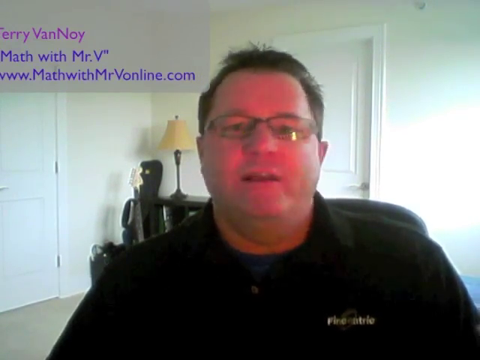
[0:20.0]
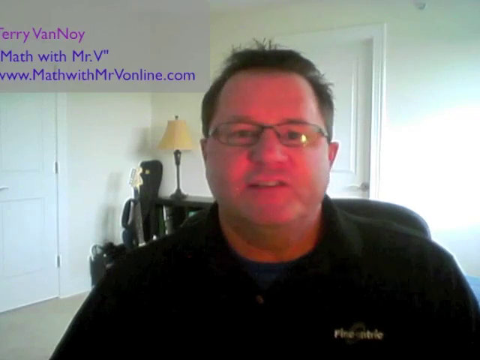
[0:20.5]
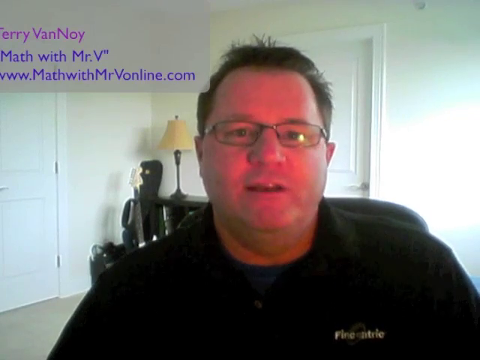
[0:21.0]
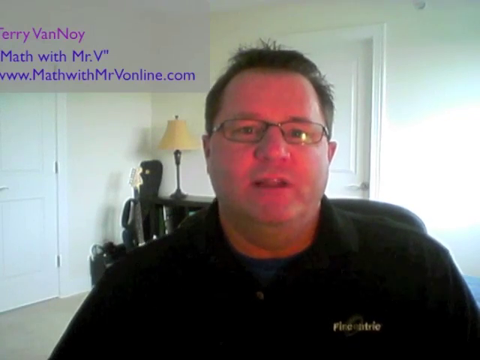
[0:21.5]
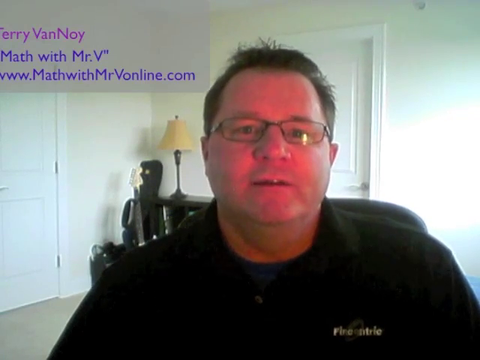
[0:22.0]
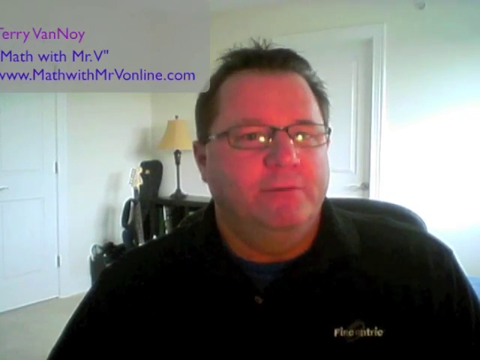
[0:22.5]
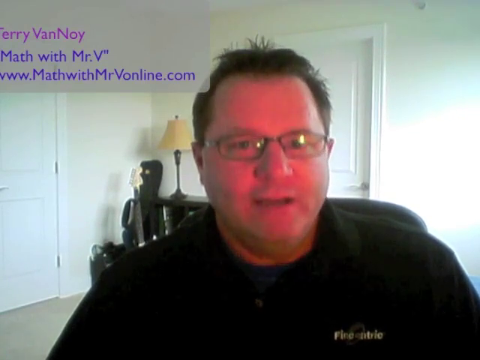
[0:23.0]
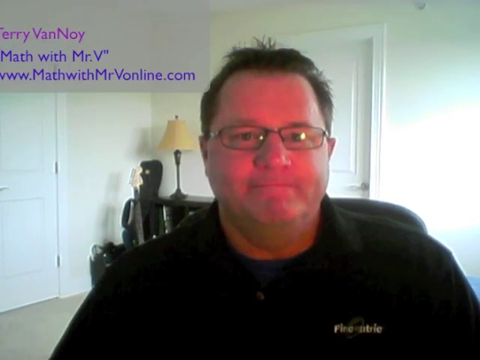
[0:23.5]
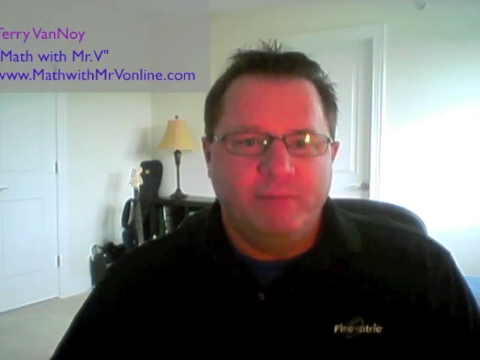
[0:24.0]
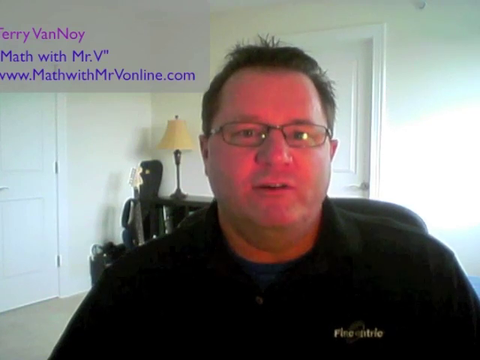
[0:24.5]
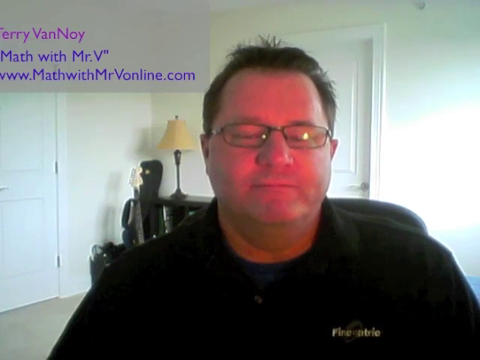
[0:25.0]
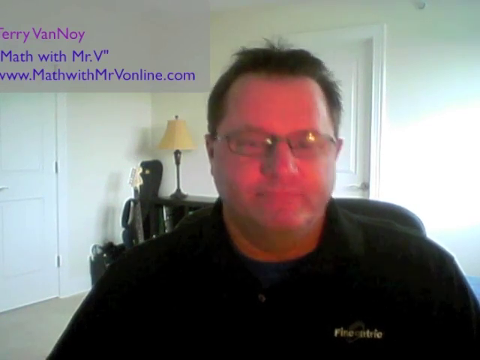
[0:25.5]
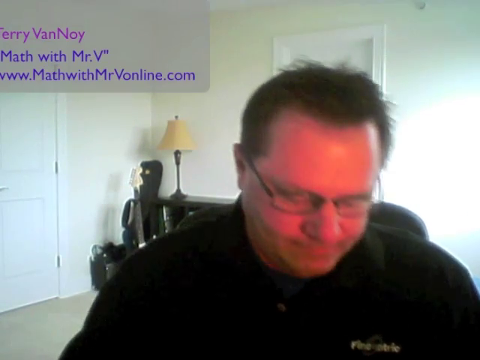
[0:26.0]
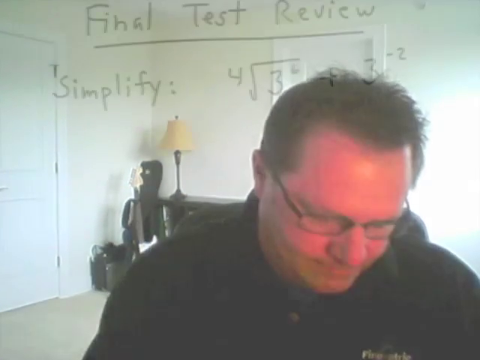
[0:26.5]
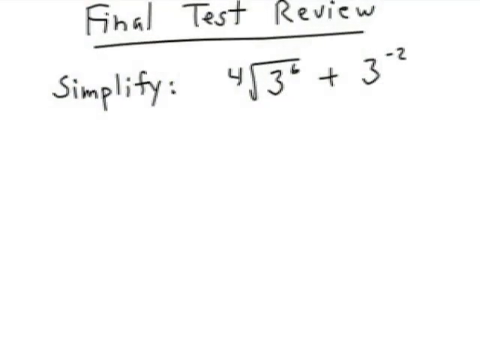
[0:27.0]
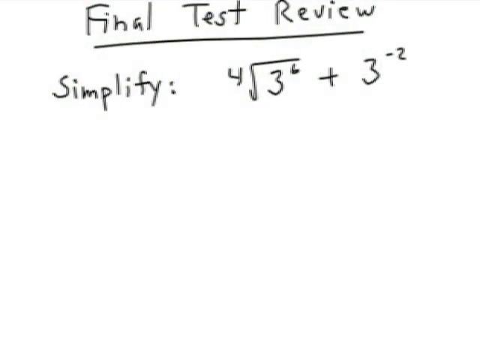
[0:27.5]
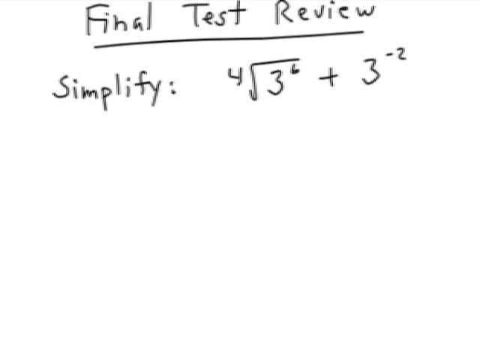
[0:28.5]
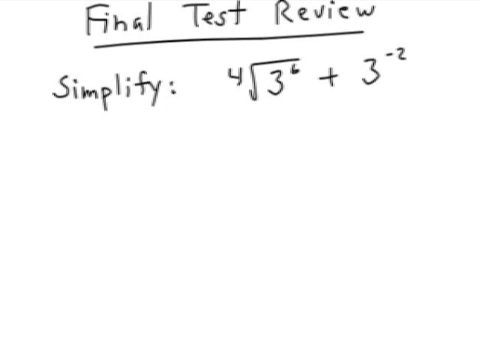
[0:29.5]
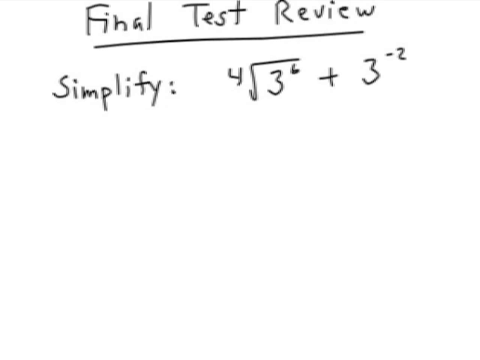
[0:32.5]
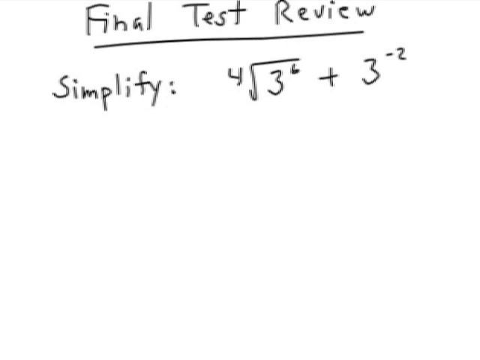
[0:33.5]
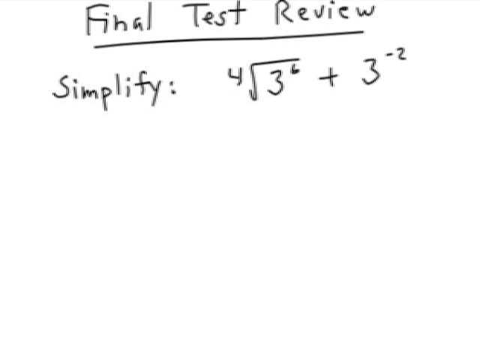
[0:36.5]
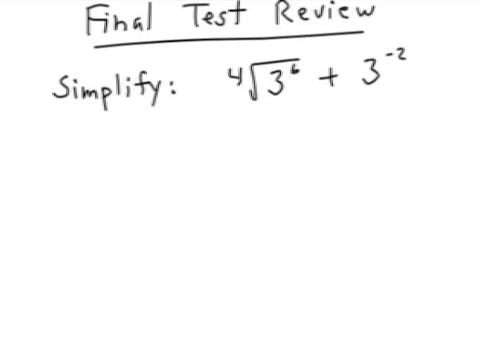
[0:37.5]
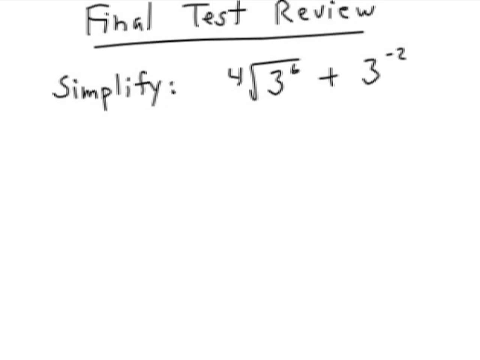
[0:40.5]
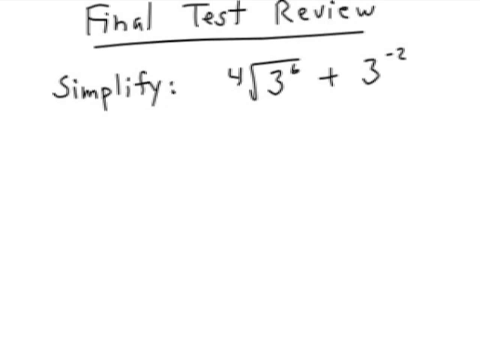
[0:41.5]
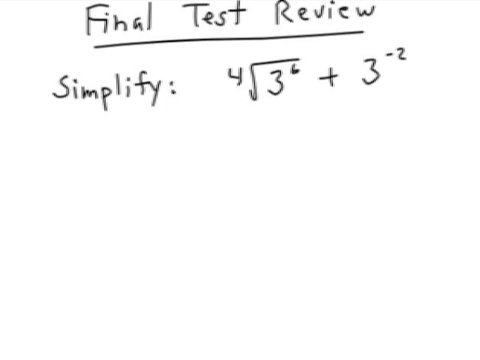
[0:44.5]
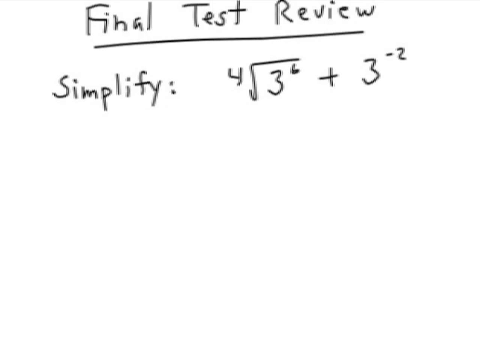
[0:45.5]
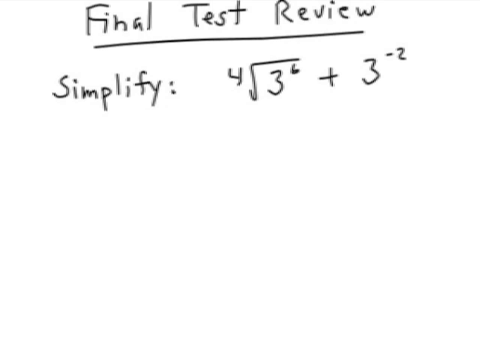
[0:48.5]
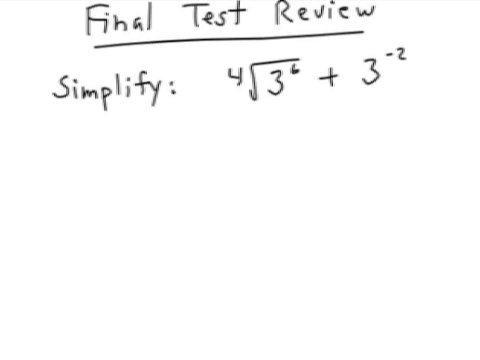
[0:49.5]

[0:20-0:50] A man sits in a basically white room. Behind him are two doors, one on one wall and one on the adjoining wall. In the corner between the doors there is a table with a lamp on it and a guitar standing up against the guitar case. The man, front and center, is slightly overweight, in his mid-30s to early 40s, and wears thin-framed glasses; his face has a pinkish glow. His hair is short and parted on the right, with little strands sticking up here and there, and his head is mostly round. He wears a black button-up shirt with a little writing on the left breast area. In the top left corner, "Terry Von Noy" appears in pinkish-purple, and below in purple are "Math with Mr. V" and "www.mathwithmrvonline.com". The man shakes his head in disagreement and agreement, then moves on to the final test review, simplifying 3 to the 6th power divided by 4 plus 3 to the negative 2nd.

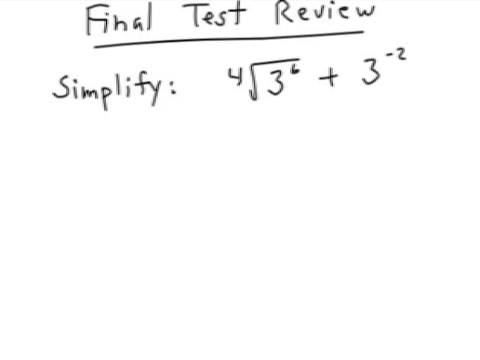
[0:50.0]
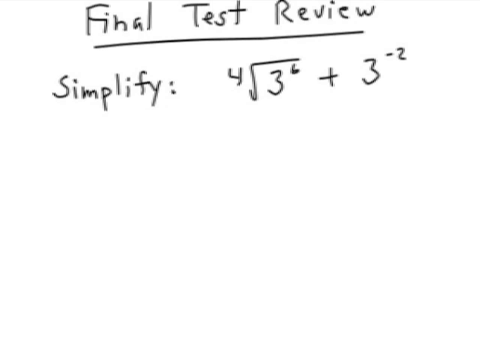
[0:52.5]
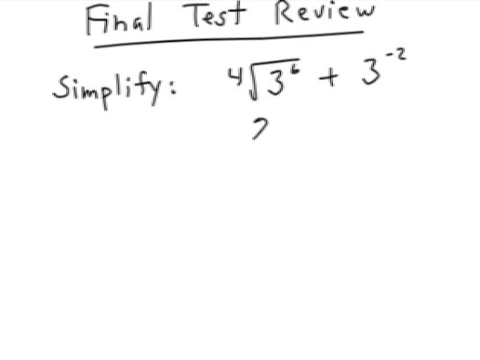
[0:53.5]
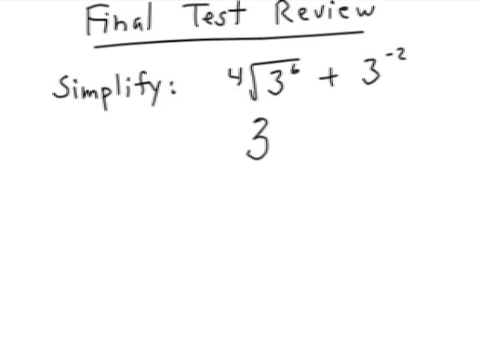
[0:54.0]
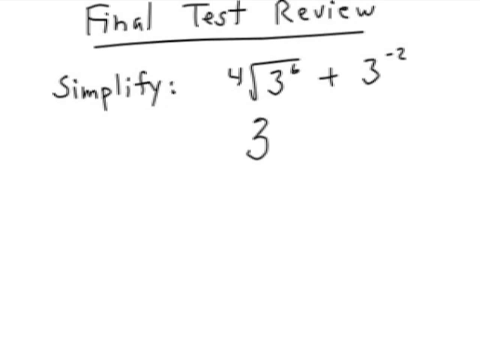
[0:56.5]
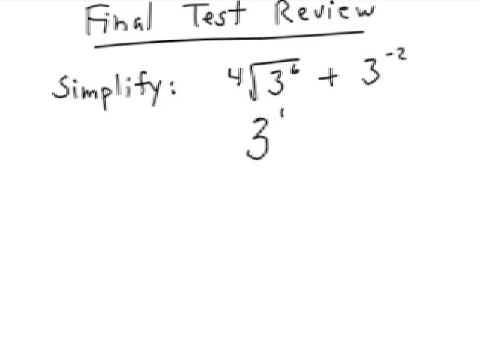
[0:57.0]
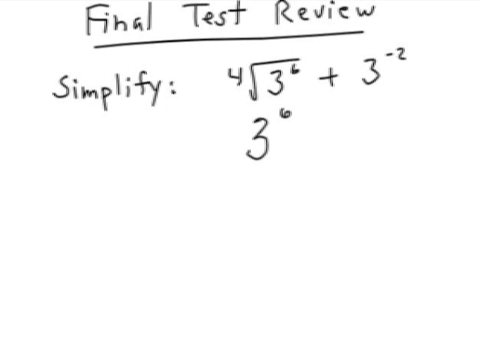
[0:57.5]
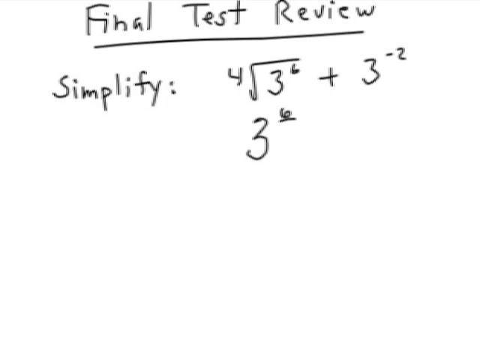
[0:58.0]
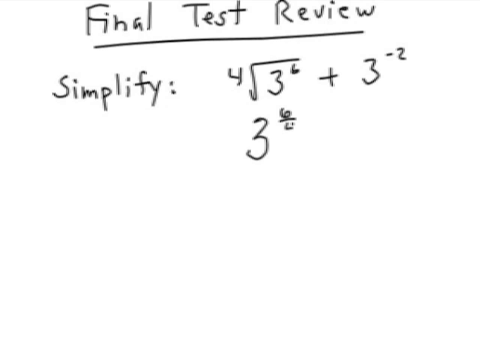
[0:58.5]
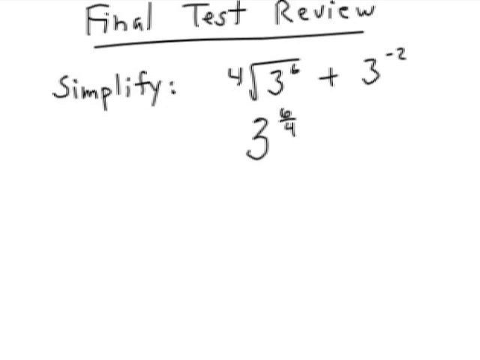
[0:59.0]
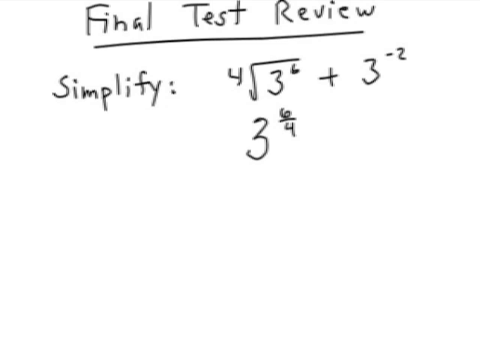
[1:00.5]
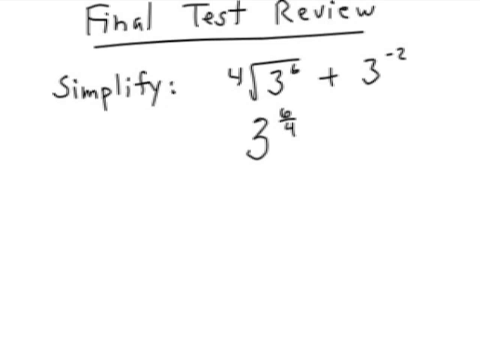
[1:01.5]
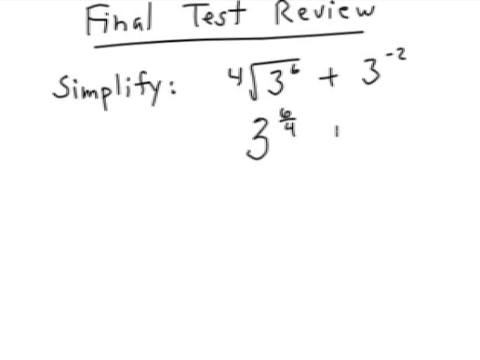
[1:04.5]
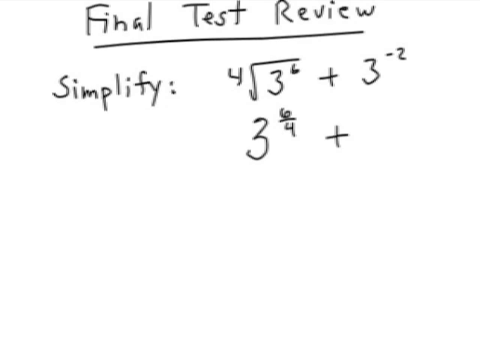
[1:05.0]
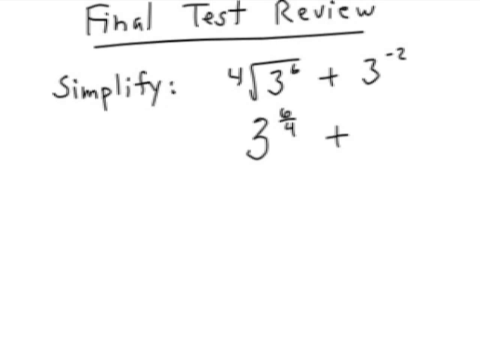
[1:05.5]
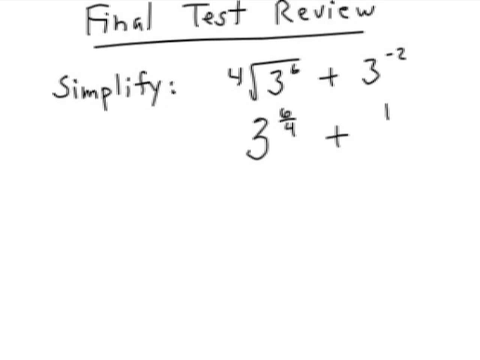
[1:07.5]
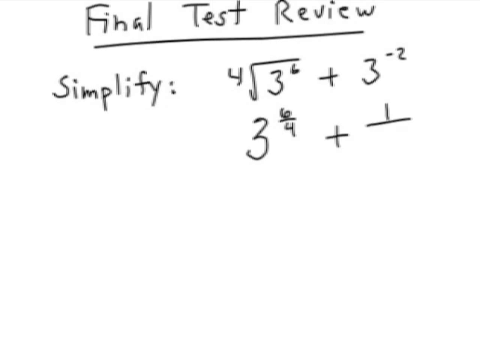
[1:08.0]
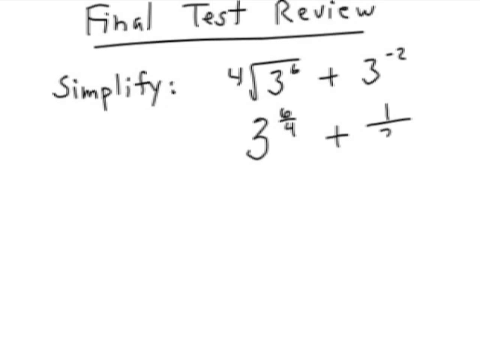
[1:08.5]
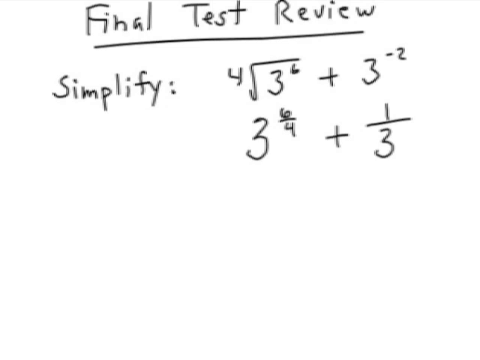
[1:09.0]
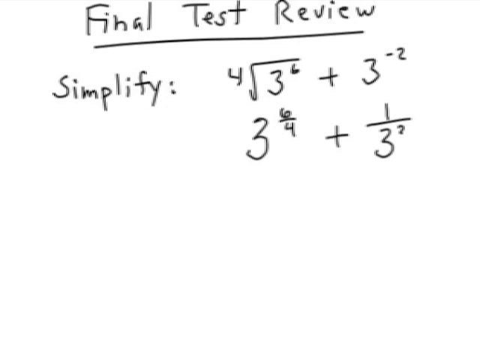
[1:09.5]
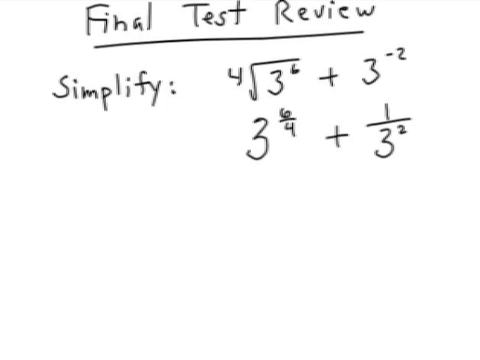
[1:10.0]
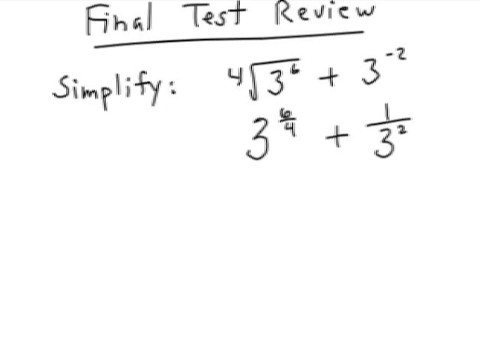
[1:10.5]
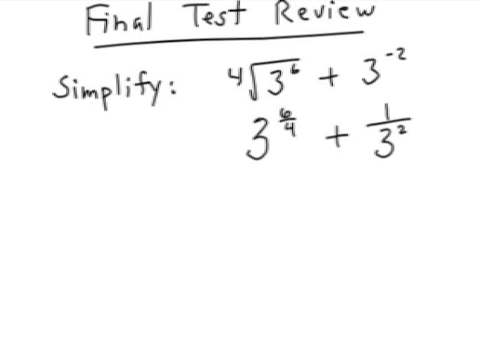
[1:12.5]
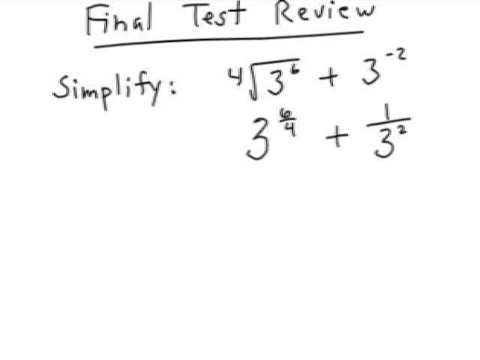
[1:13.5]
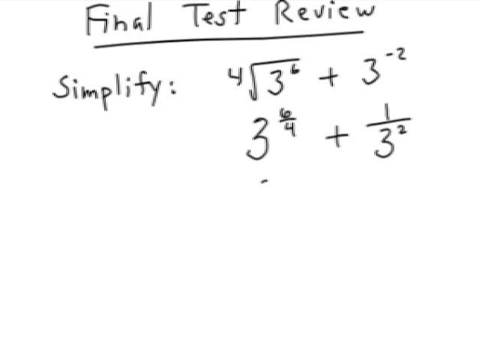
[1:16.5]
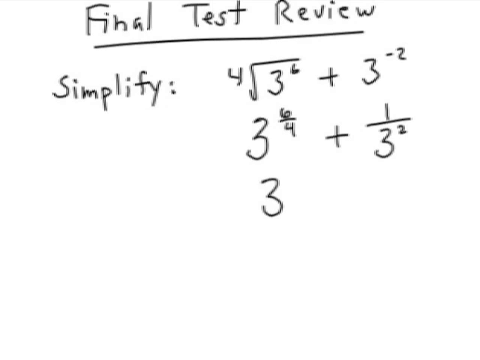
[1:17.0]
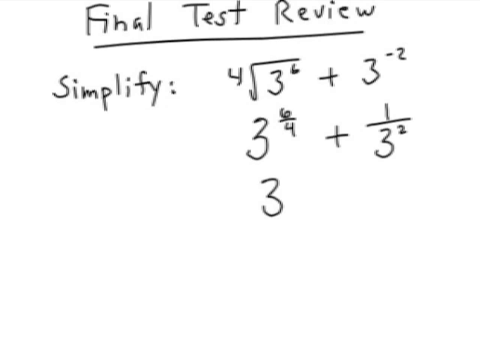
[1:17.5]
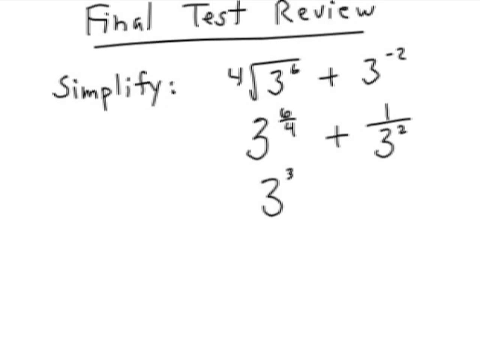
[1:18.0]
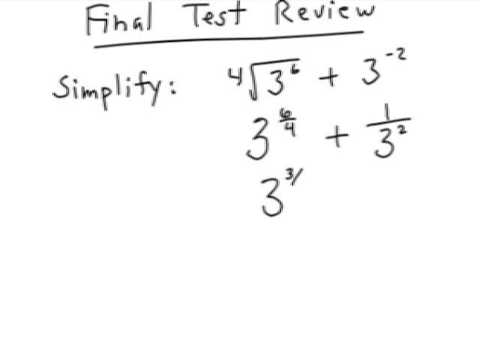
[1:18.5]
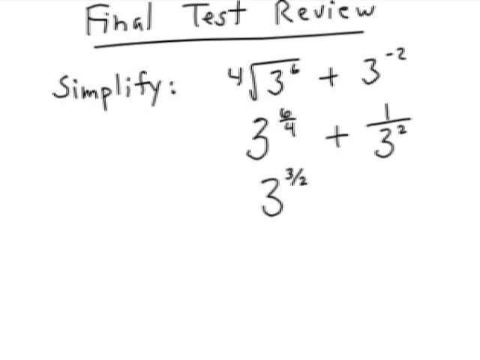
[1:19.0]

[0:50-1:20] A solid white area fills the center, with two large black borders on each side. At the top of the white area, "final test review" is written and underlined; it looks handwritten on a piece of paper. Underneath, it says "simplify:" followed by a small space and the expression 3 to the 6th power plus 3 to the negative 2nd divided by 4. The picture does not change much at first; then the work is written out underneath, showing a 3 with a 6 over 4, then a plus and 1 over 3 to the 2nd, as the expression is worked through one step at a time.